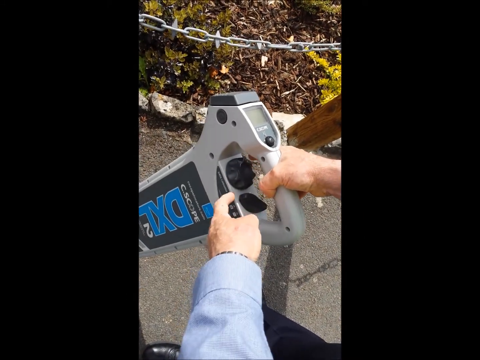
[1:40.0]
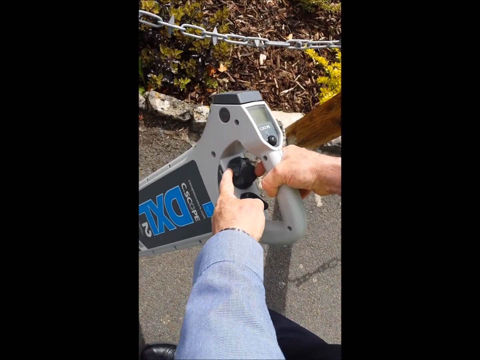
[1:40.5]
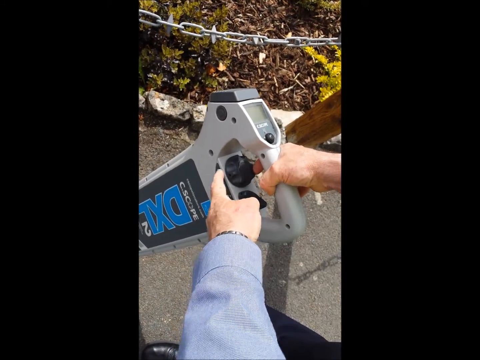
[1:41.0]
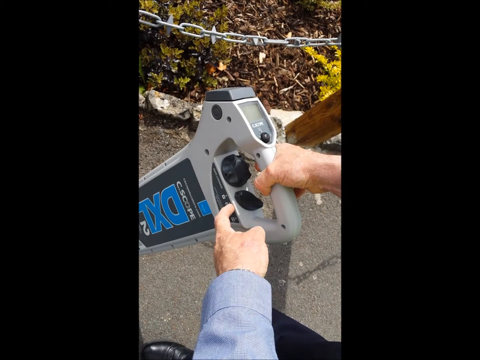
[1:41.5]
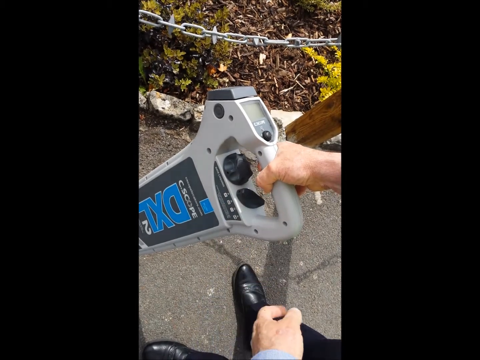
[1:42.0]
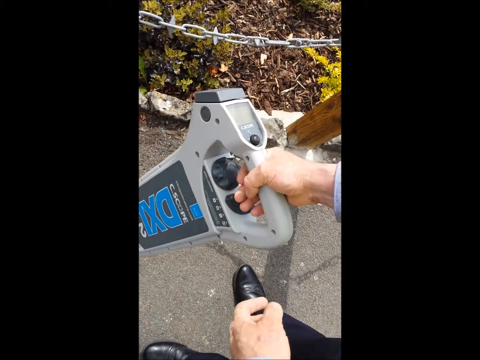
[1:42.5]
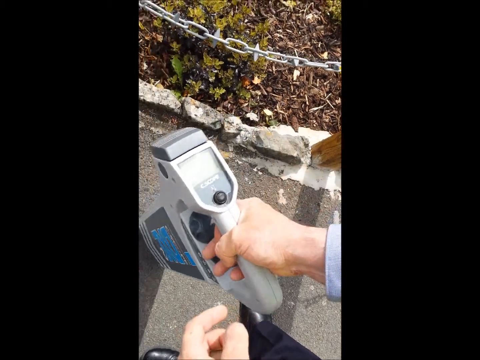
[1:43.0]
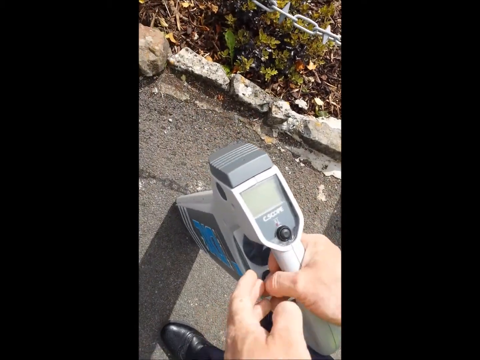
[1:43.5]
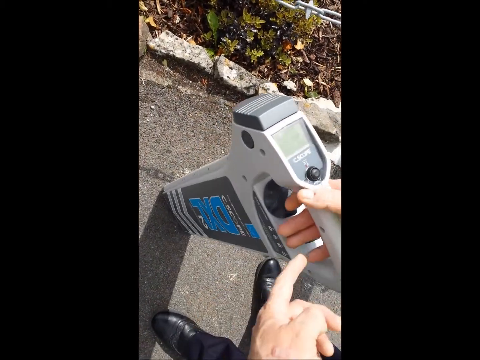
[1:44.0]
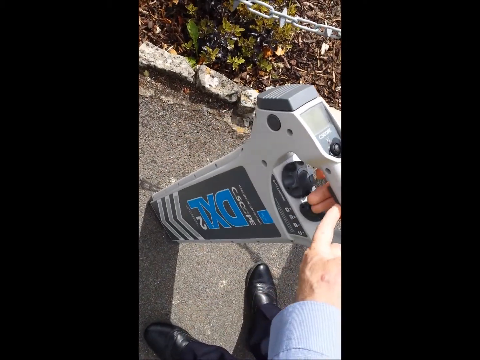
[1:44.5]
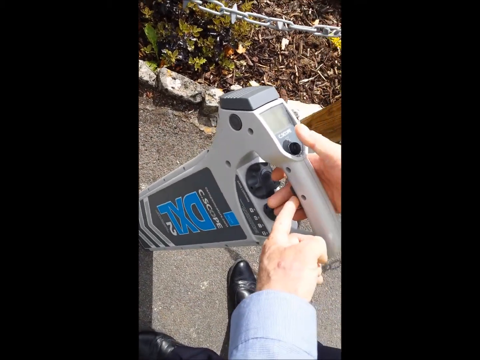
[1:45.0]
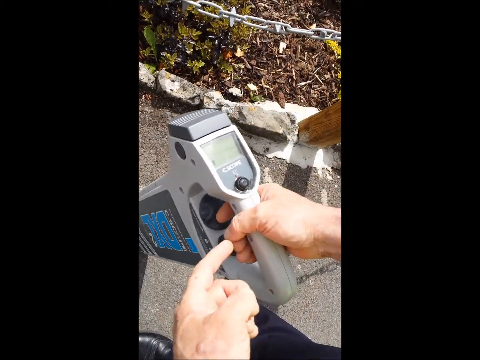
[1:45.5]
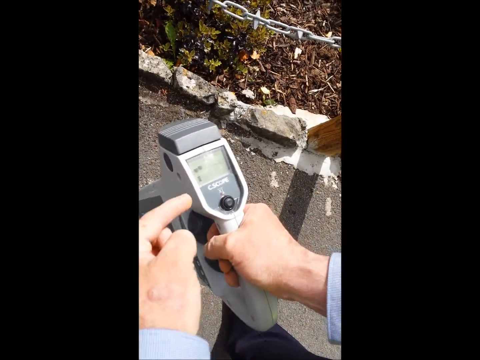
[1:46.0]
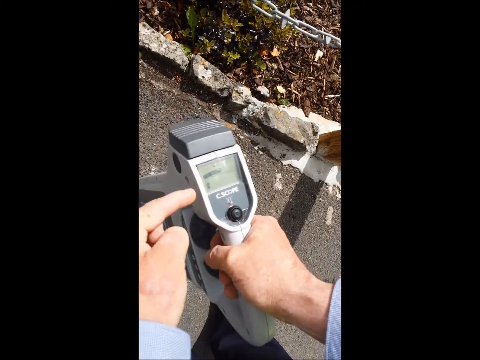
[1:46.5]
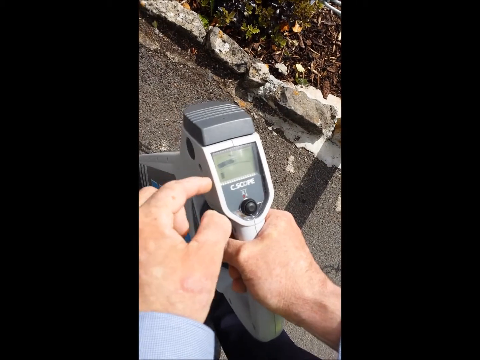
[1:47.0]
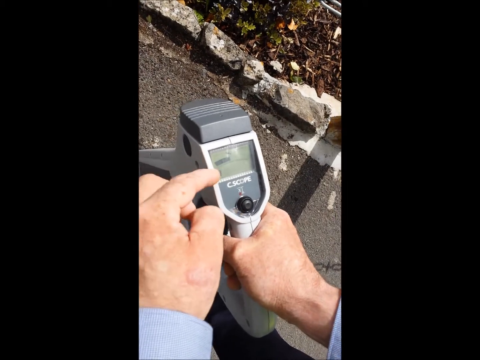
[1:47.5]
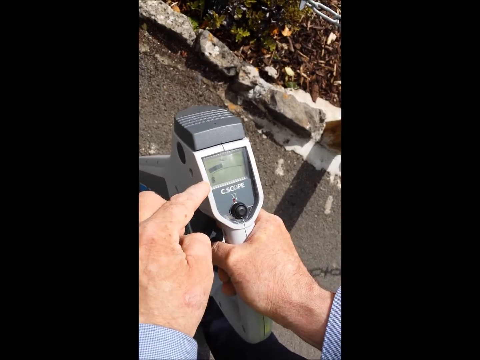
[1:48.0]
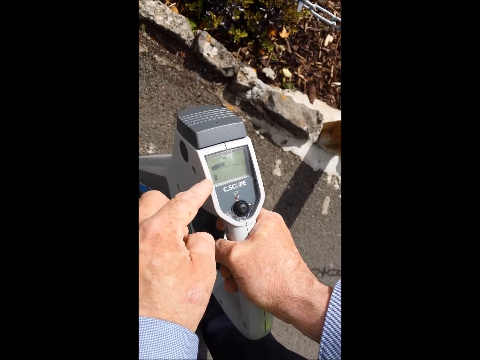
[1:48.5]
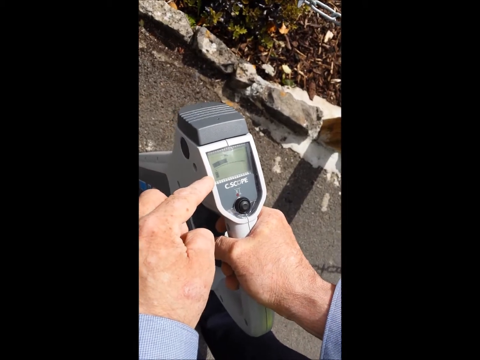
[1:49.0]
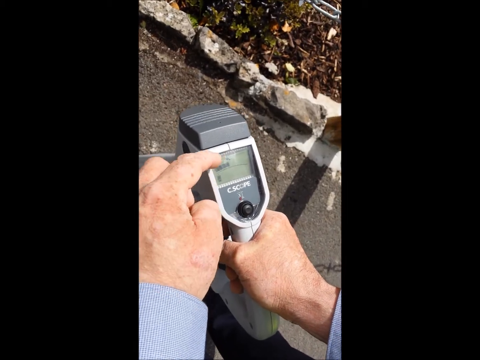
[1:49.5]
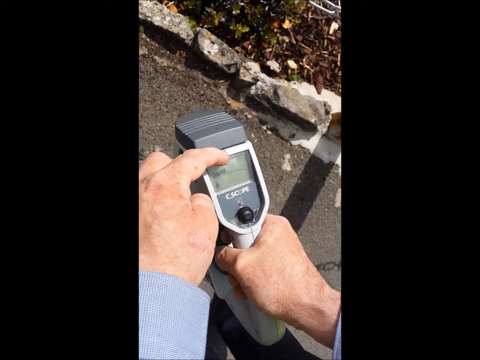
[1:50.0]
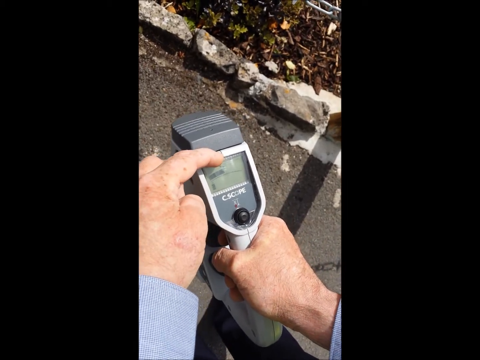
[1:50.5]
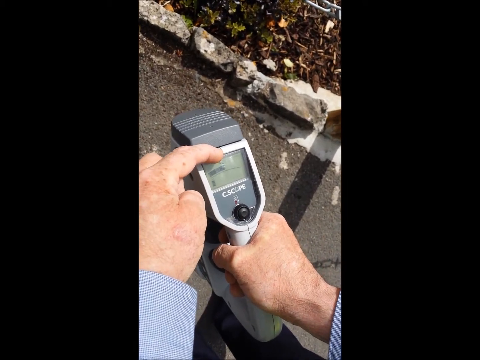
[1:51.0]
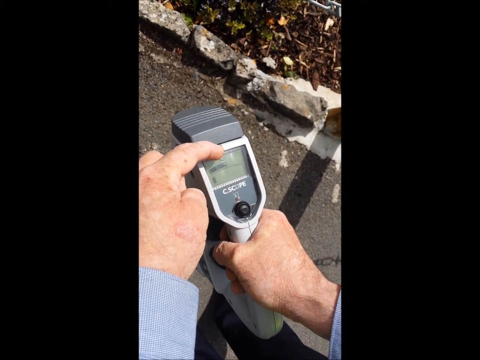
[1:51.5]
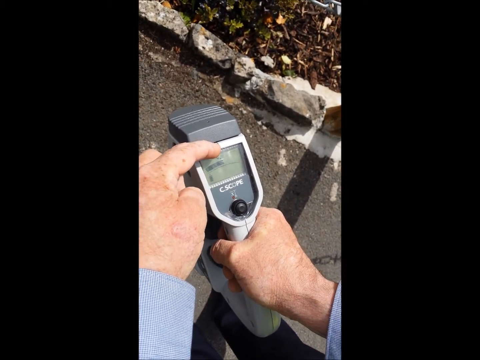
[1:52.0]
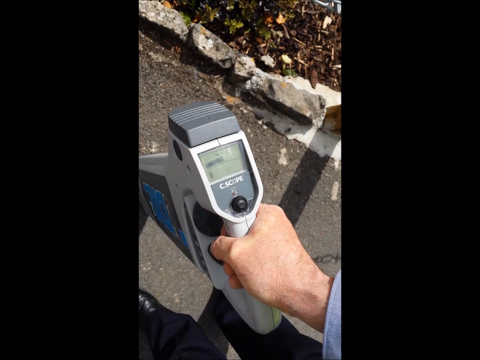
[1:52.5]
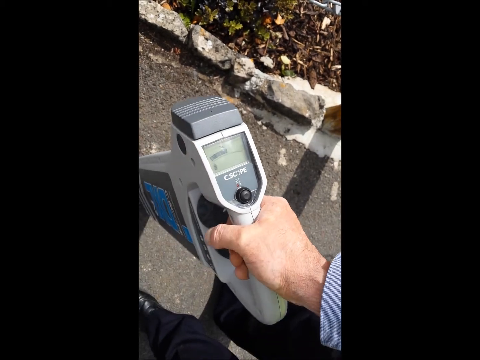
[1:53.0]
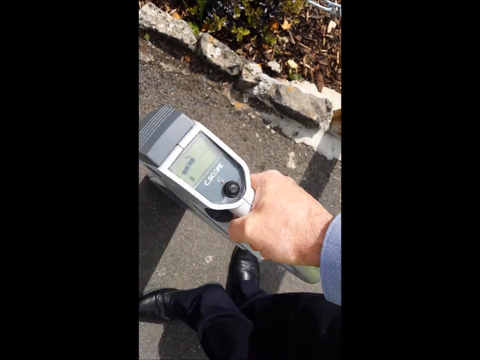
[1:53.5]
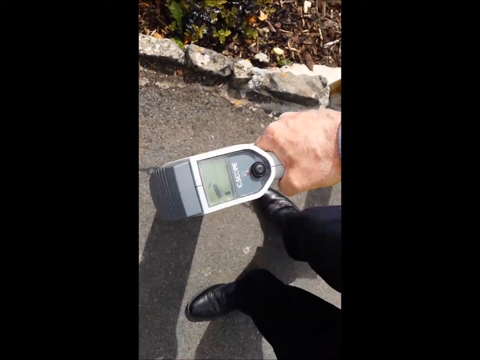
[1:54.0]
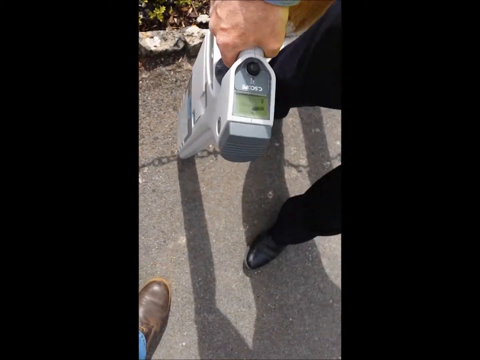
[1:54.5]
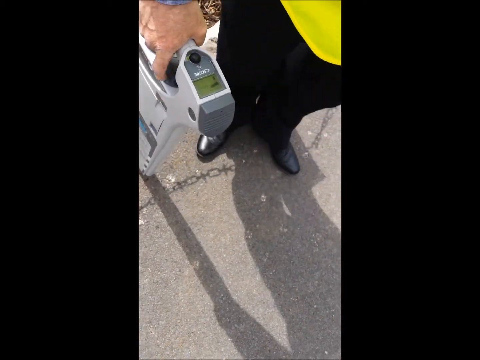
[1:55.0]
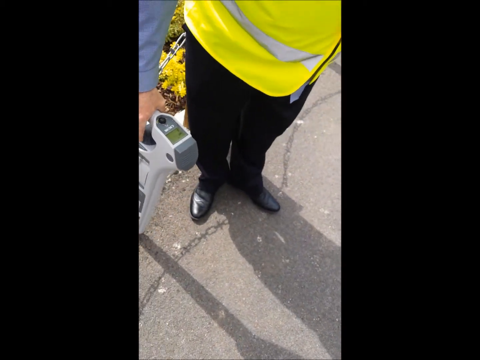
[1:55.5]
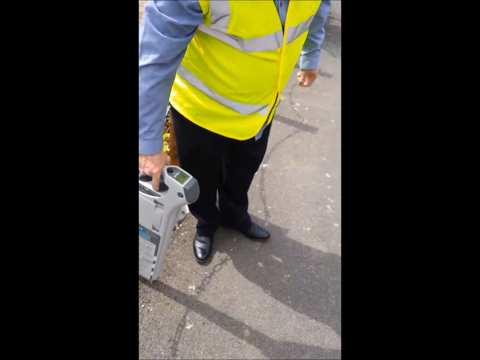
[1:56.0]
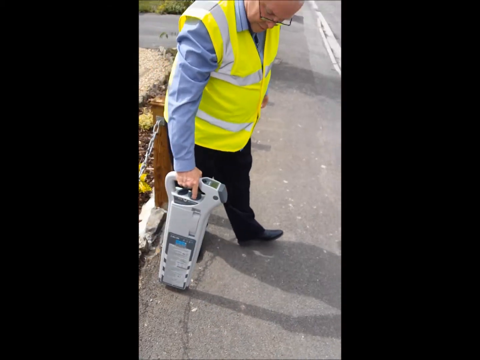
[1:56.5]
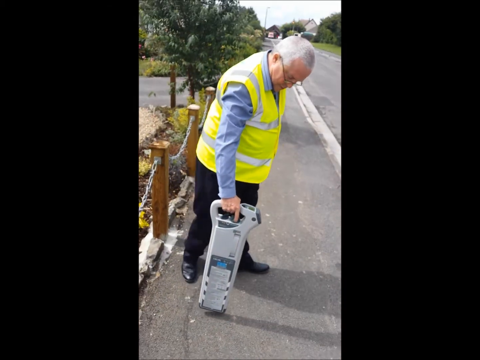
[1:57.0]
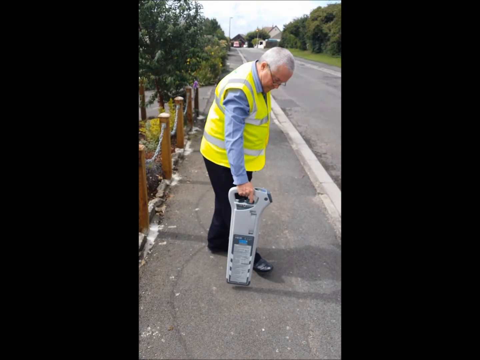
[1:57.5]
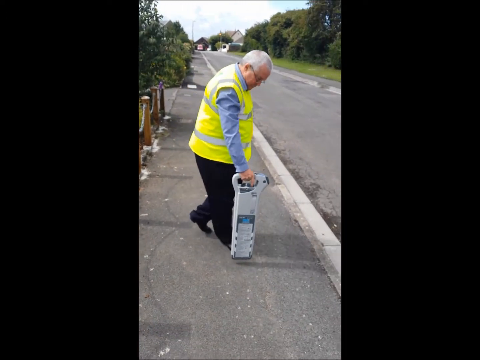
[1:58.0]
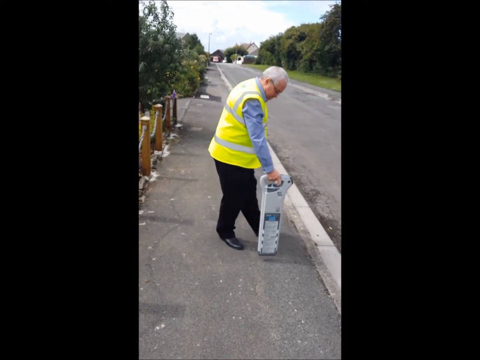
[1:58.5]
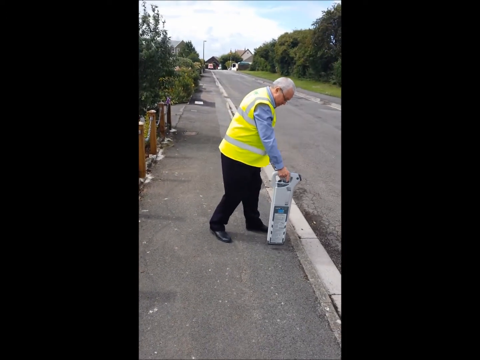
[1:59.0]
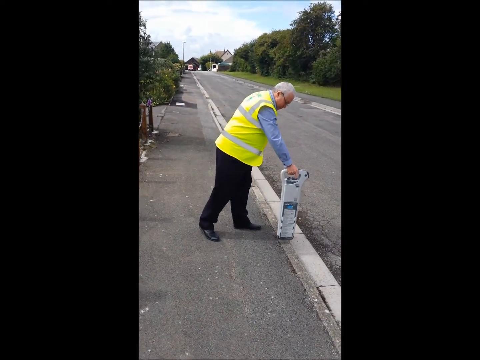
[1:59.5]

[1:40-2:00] A man holds a power mode detection device and points to the digital output on top, which only shows about one, though some moving squares appear as he turns it. He then goes backwards, taking it across a road to show how power mode is detected, pointing with his hand to the digital area; the item is called the C scope. Someone else is filming him, and only that person's shoes are visible. The man wears black dress shoes, black pants, a long-sleeved light blue shirt, and a bright yellow vest with gray reflective stripes.